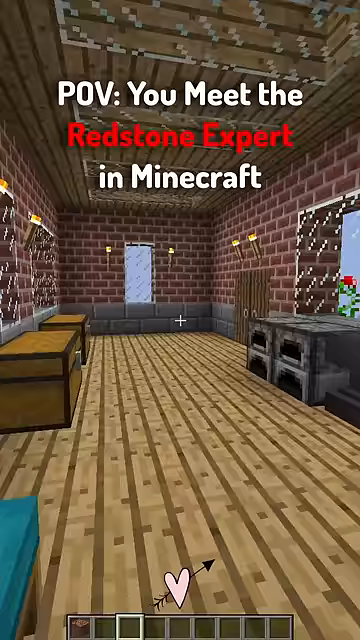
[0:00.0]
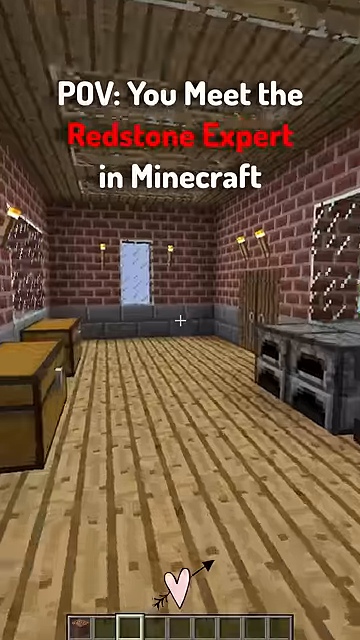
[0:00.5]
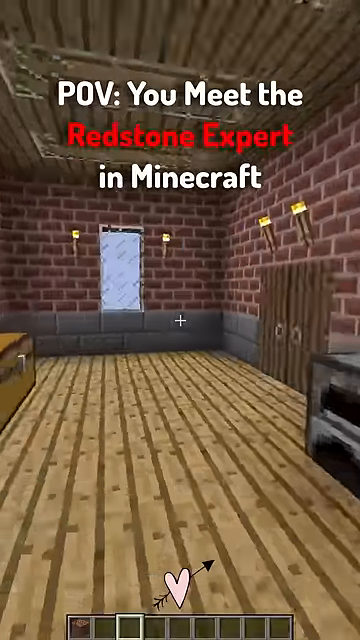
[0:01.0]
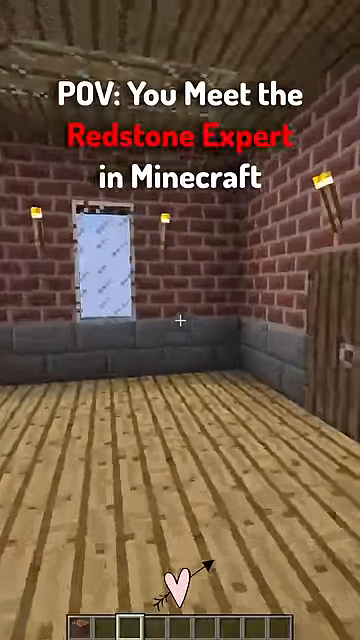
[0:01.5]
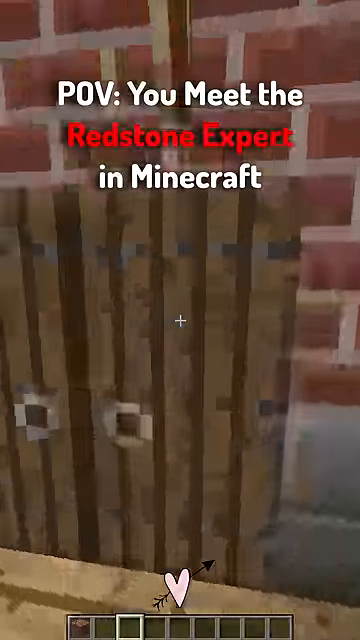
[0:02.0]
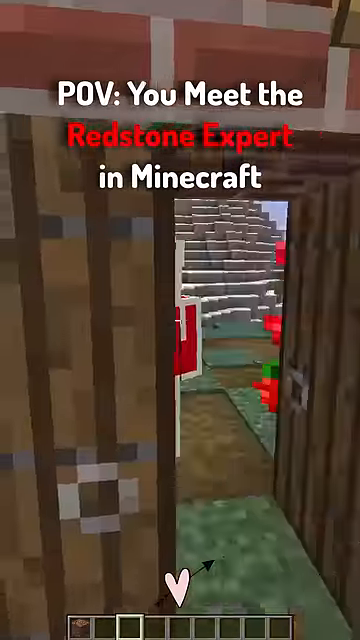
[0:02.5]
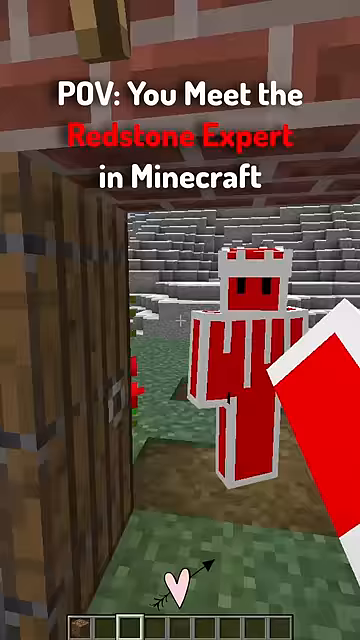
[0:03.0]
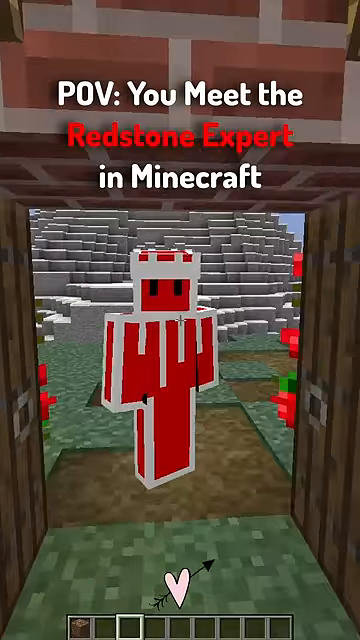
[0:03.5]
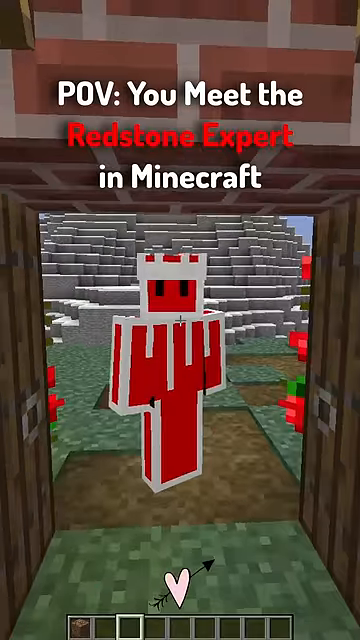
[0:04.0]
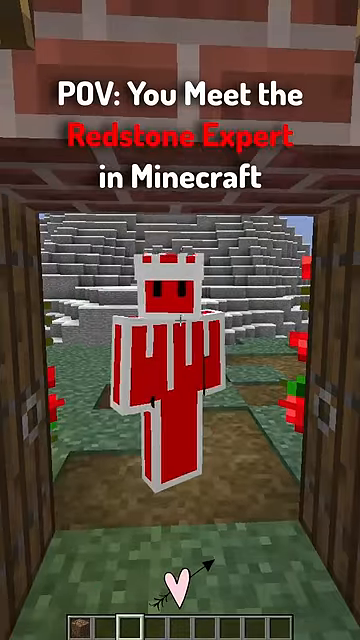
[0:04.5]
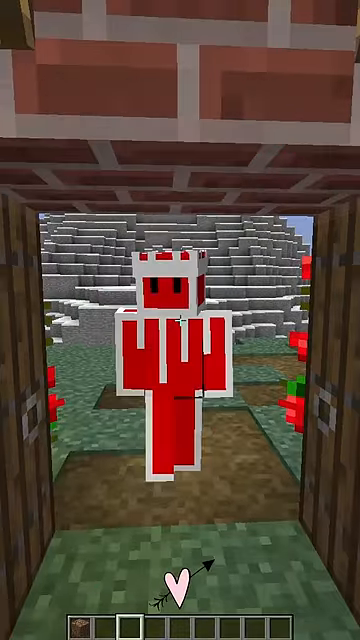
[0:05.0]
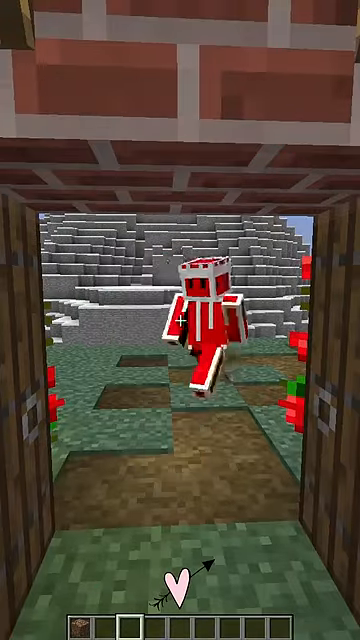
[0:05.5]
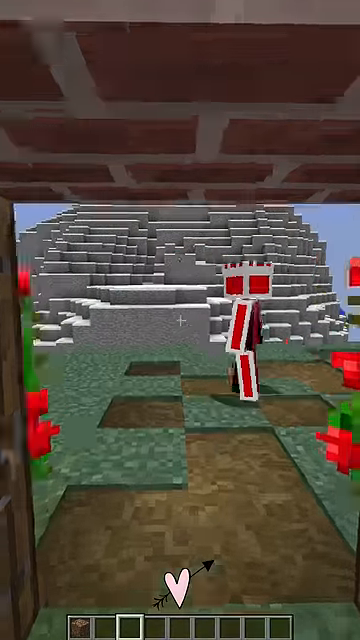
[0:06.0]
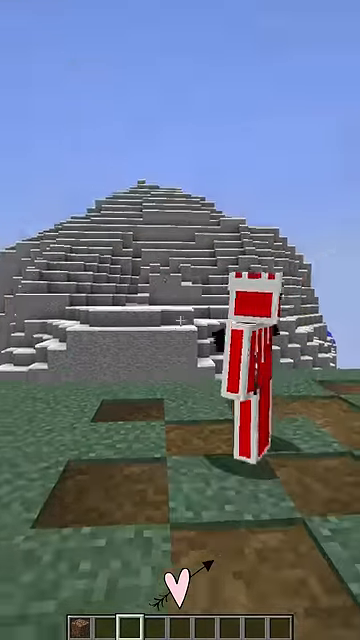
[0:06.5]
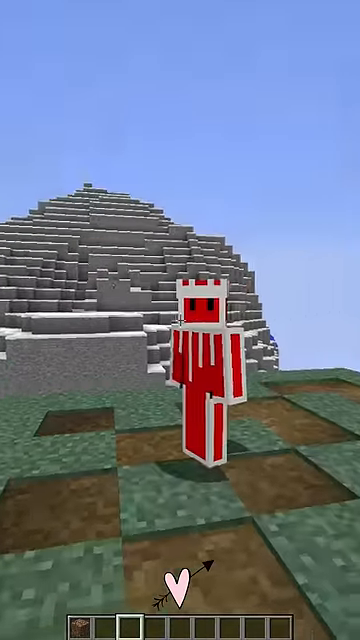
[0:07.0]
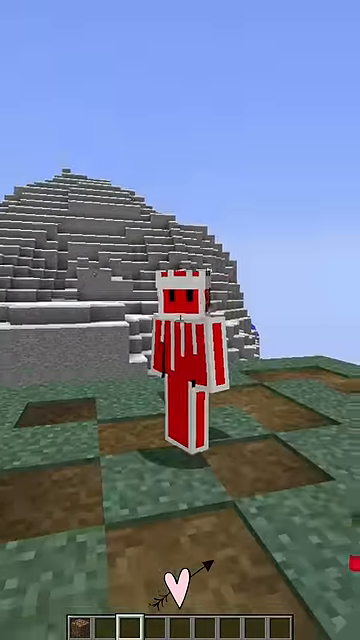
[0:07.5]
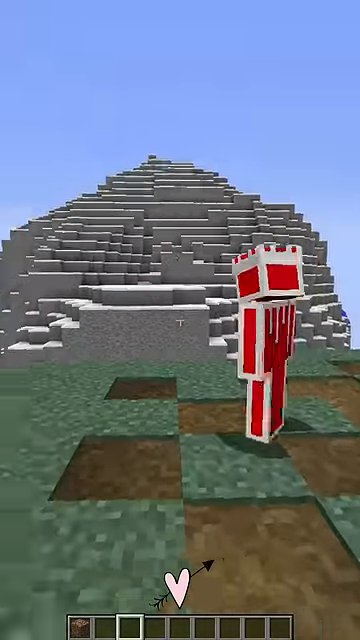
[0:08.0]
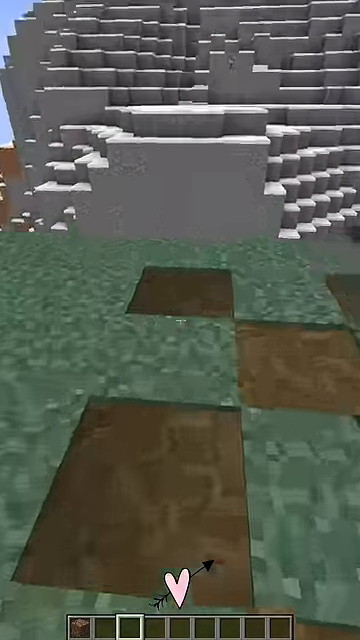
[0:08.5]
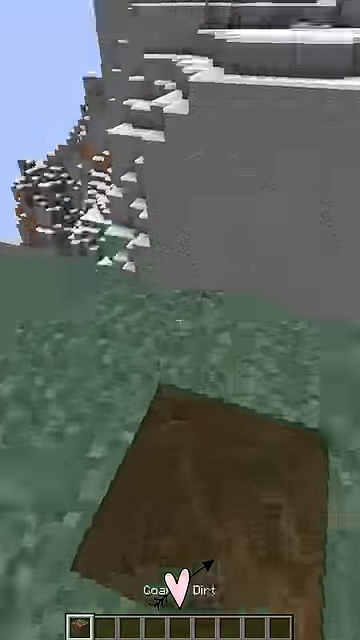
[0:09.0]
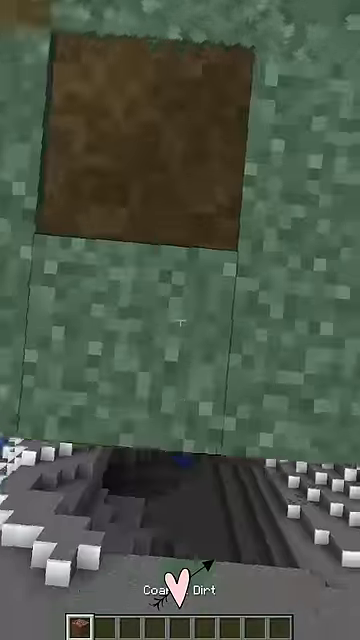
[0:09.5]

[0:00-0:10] A first-person screen recording of a video game, presented in a meme format, with white and red on-screen text reading "POV, you meet the redstone expert in Minecraft". The player opens in a room with brick walls and a wooden floor. To the left there is a solid wall, and to the right another wall with a door. Counters and cabinetry are all around the room, which looks like some sort of workspace, and directly at the front of the room there is a large window. The player walks into the room toward the door on the right and pushes it open, revealing a red stick figure character wearing what appears to be a helmet. Behind the figure are piles of what look like cinder blocks in gray concrete, and the ground below has turned into squares of grass and dirt in brown and green. The player's character moves forward, with the second character to his right, to the edge of what looks like a cliff, with the pile of cinder blocks across on the other side.